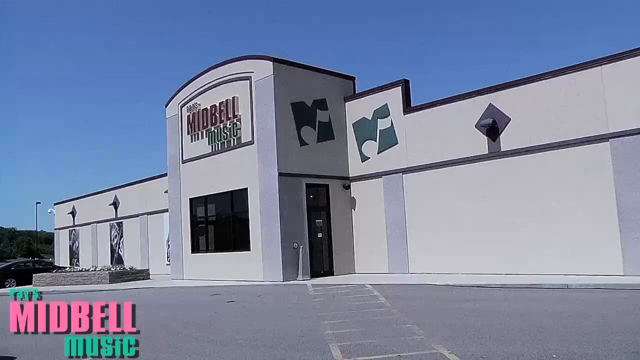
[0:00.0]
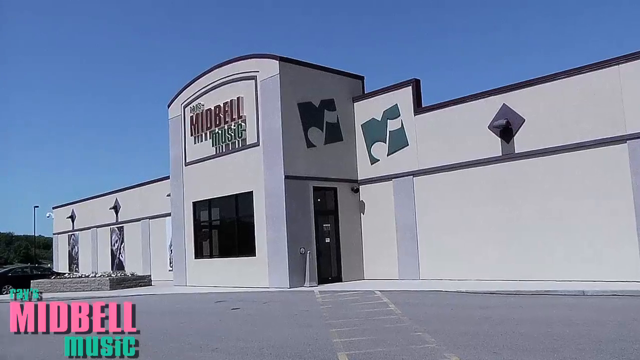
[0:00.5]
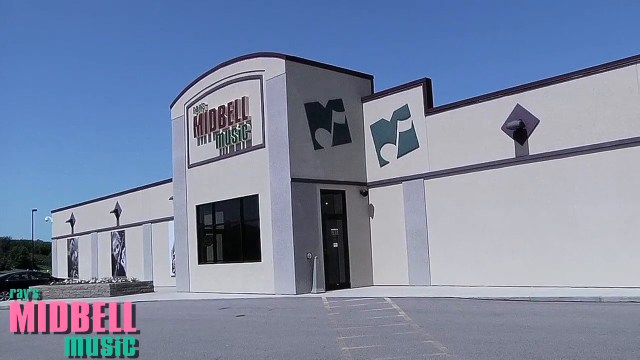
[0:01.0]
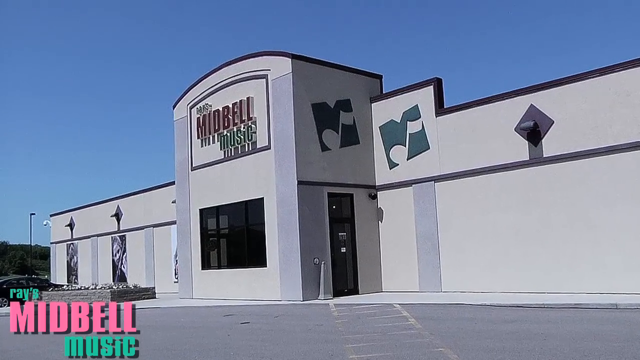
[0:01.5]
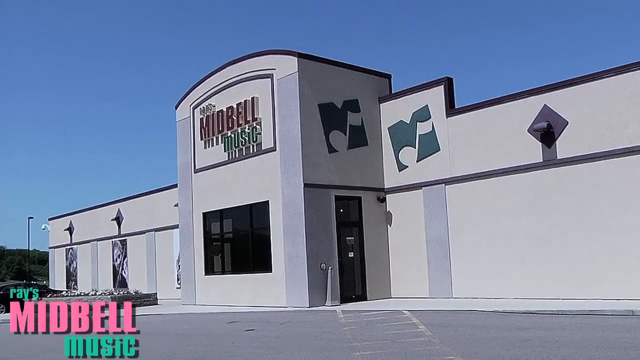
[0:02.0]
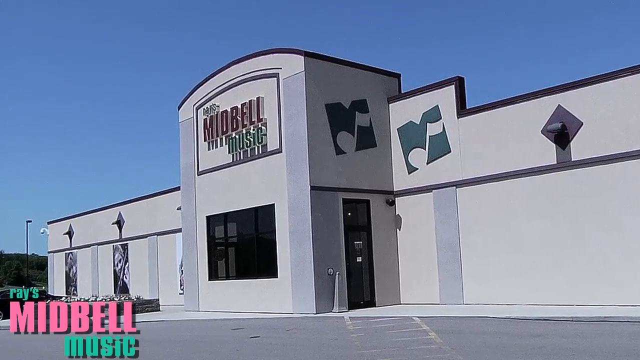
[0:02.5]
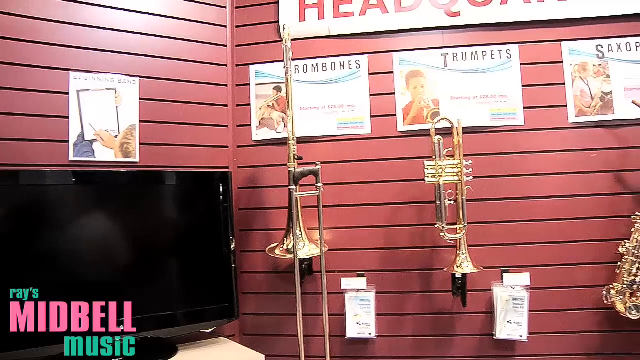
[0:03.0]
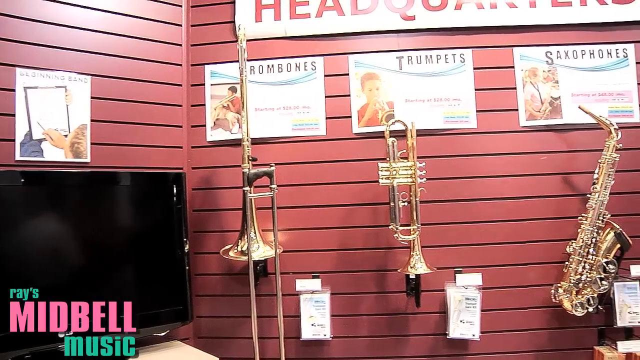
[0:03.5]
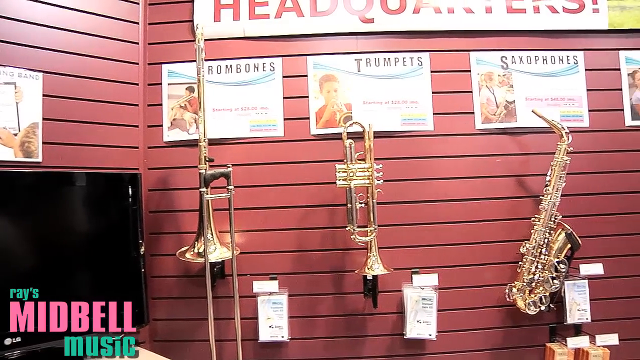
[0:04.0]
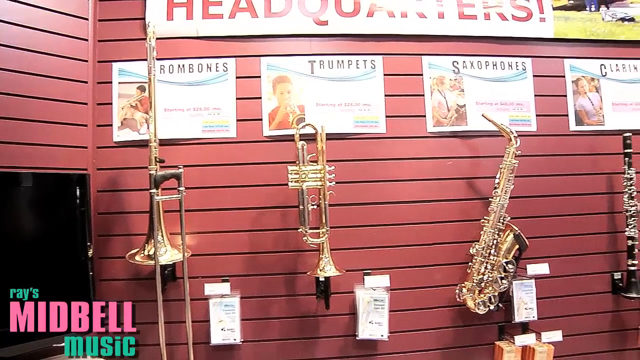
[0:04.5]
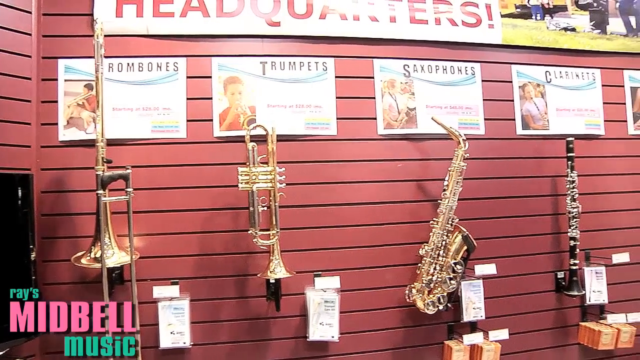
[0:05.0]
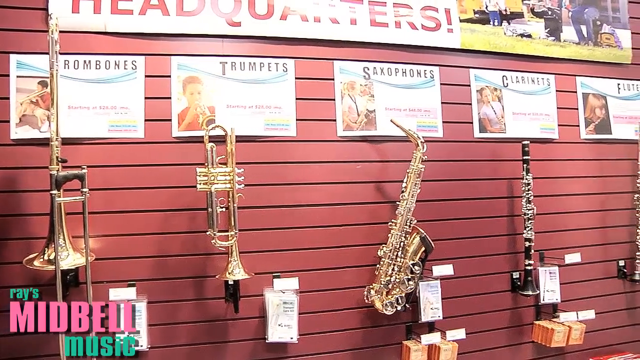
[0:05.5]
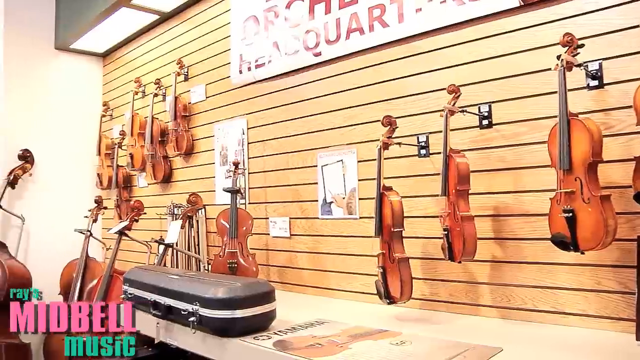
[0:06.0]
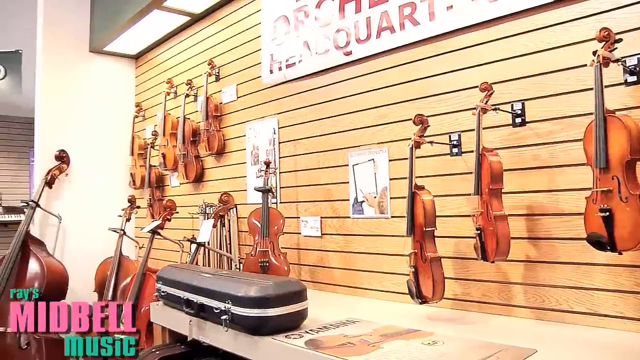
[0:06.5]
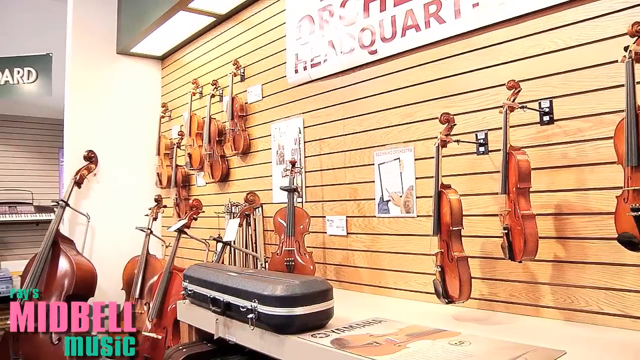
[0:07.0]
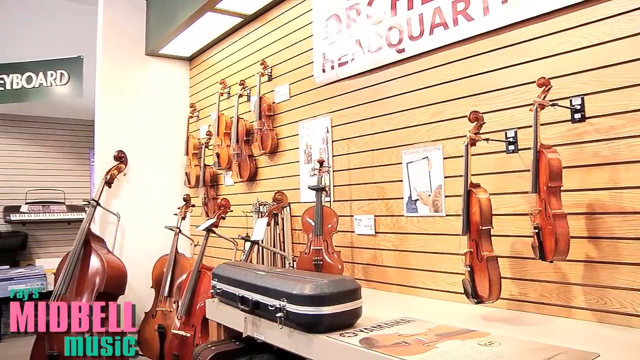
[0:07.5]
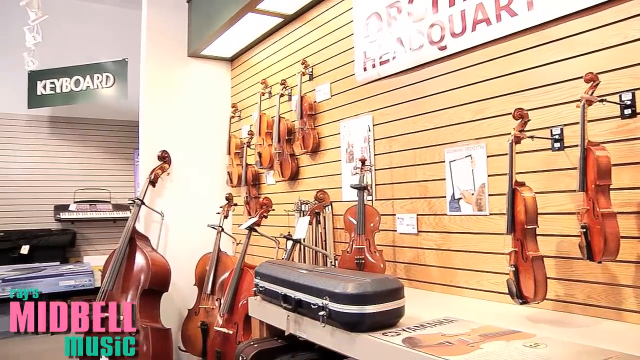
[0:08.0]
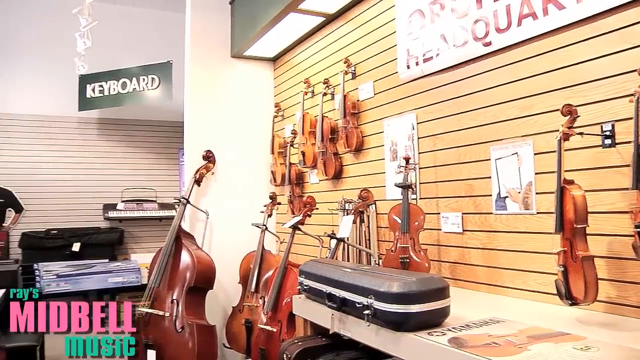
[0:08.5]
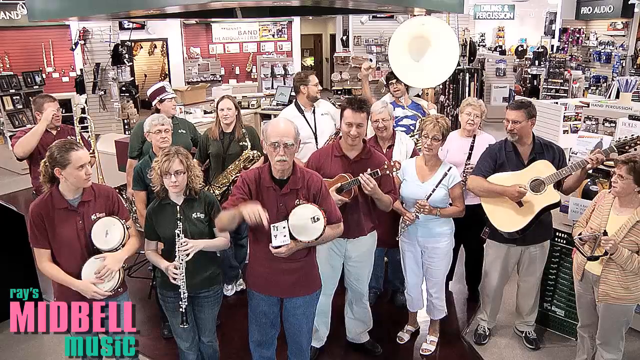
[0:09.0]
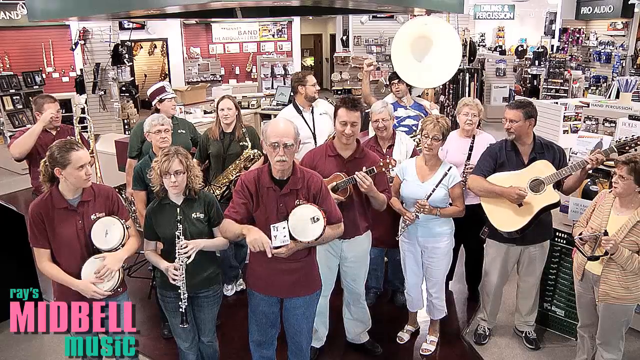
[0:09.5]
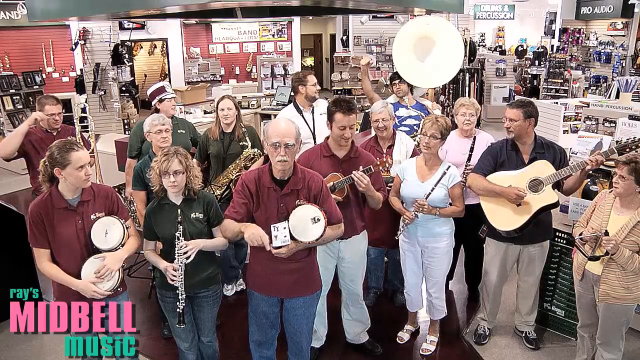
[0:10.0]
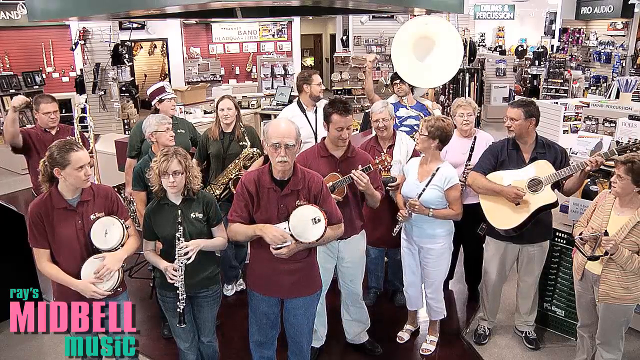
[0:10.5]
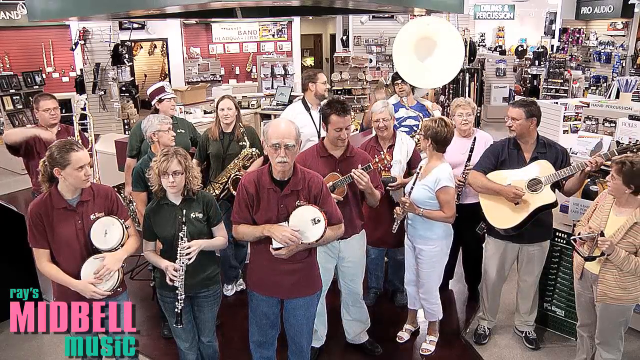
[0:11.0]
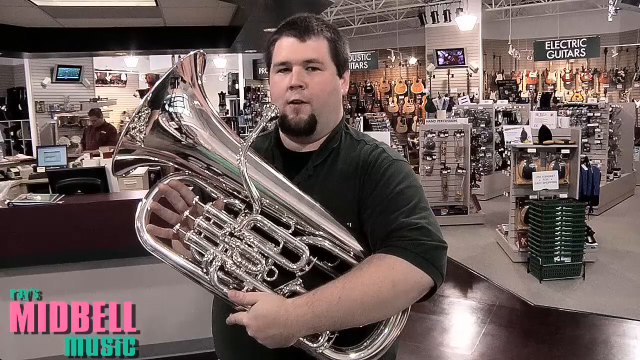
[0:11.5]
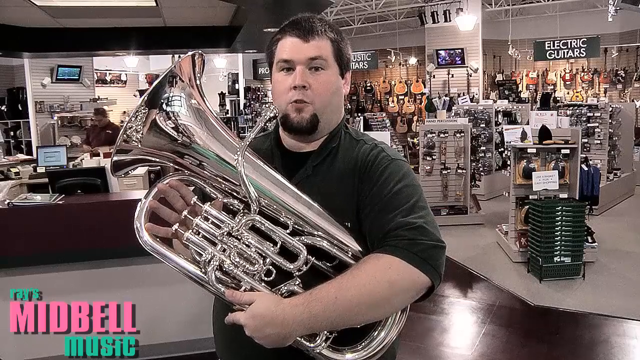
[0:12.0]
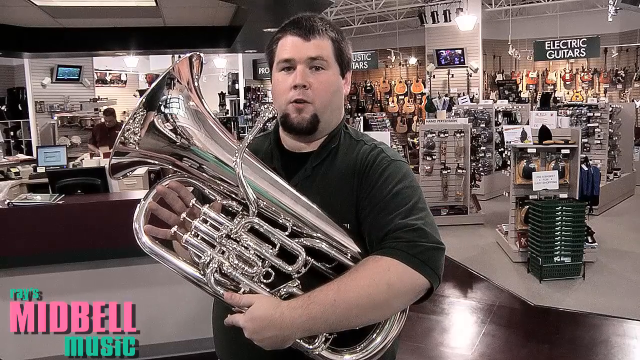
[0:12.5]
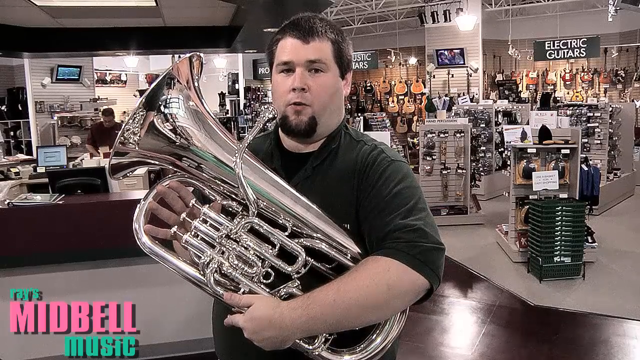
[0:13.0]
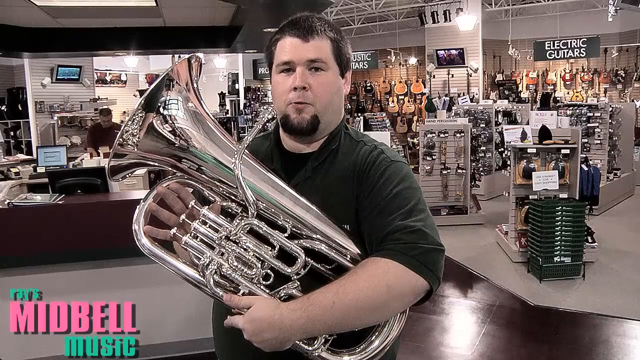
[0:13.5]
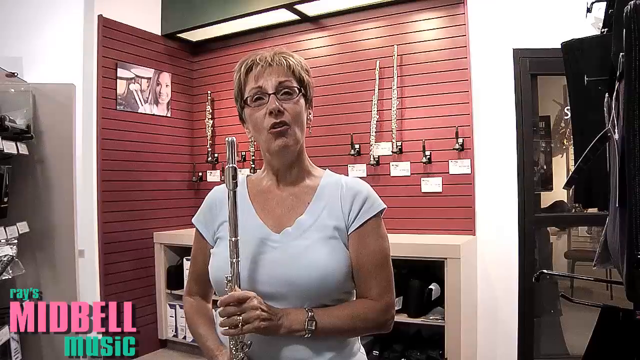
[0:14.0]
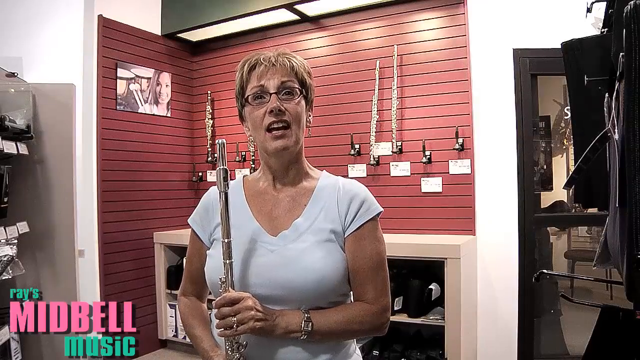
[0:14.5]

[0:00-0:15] The video opens on the outside of a store called Midbell, then switches to what is presumably the inside of the store, which sells many musical instruments. The second shot is a wall display of brass instruments, including saxophones and flutes. Next comes another display of woodwind instruments hanging on a wall, including violins and cellos. The scene then switches to what looks like a shot of the employees, all standing in front of the camera facing forward and apparently talking. It then seems to cut to customers: first a man holding some kind of large French horn and saying something into the camera, then a female customer holding what looks to be a flute, talking to the camera almost as if she were being interviewed.